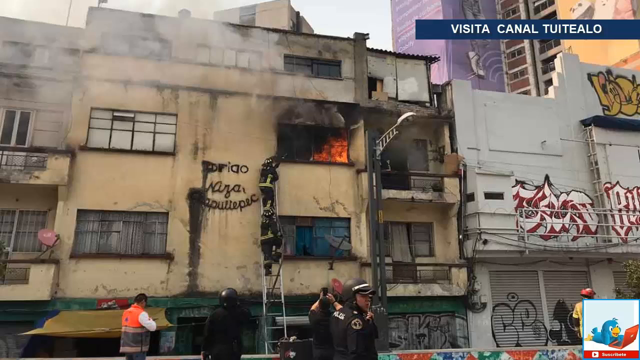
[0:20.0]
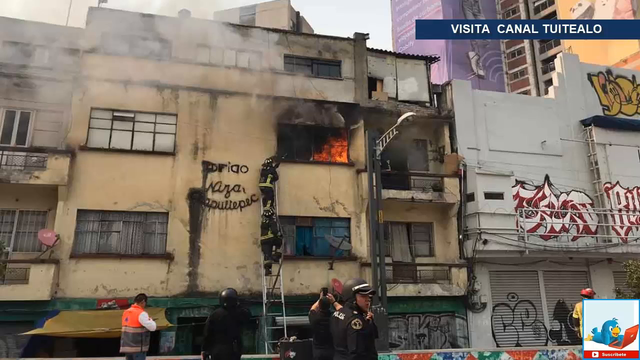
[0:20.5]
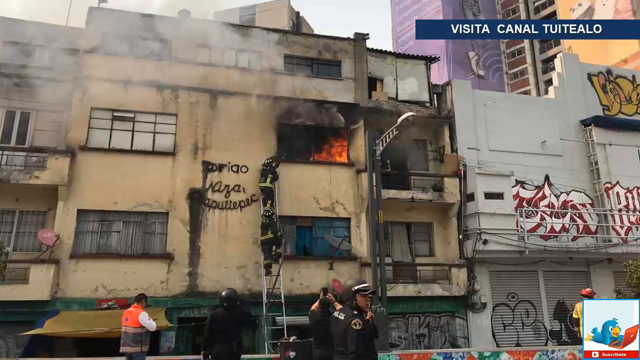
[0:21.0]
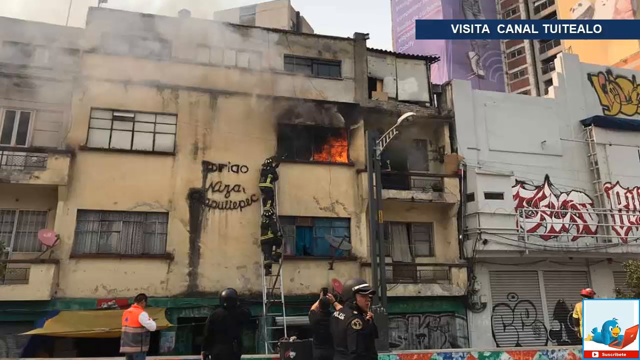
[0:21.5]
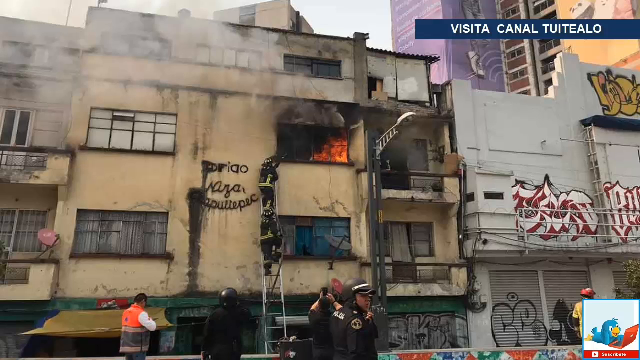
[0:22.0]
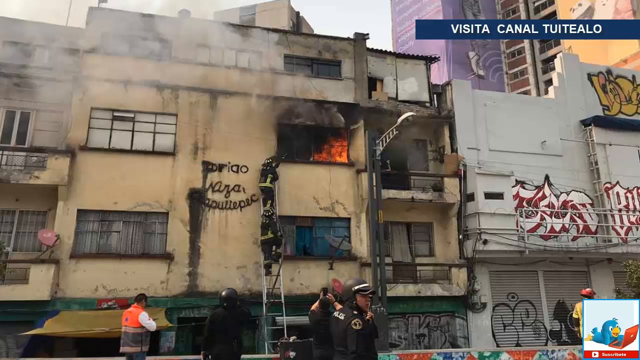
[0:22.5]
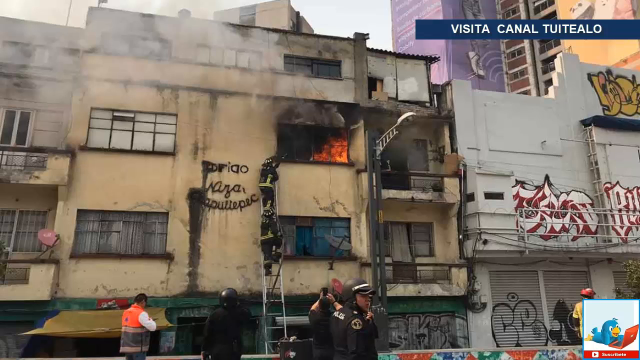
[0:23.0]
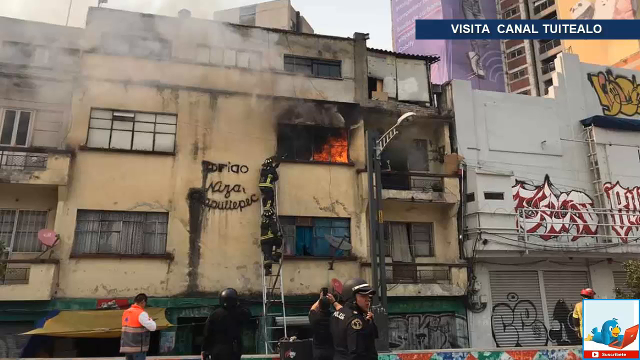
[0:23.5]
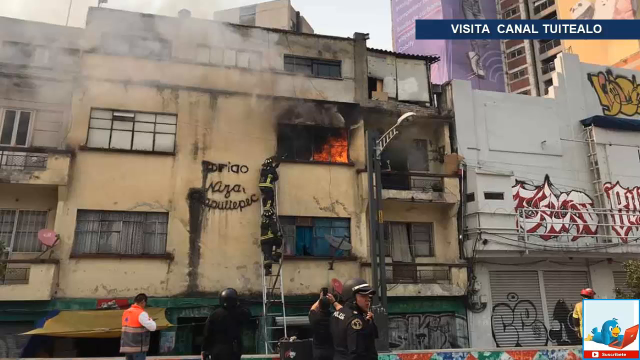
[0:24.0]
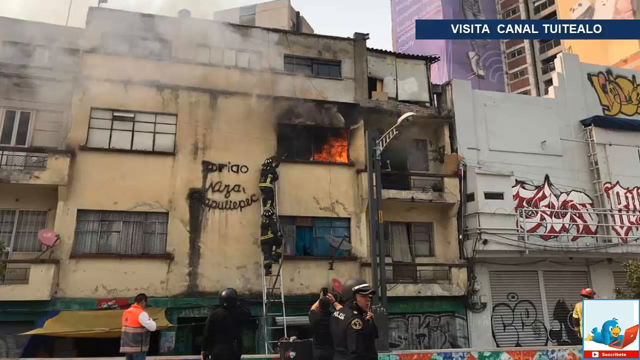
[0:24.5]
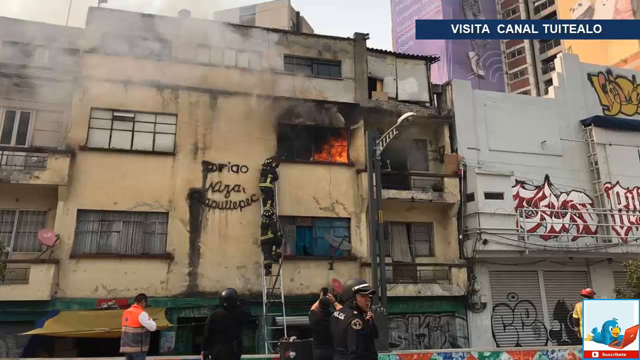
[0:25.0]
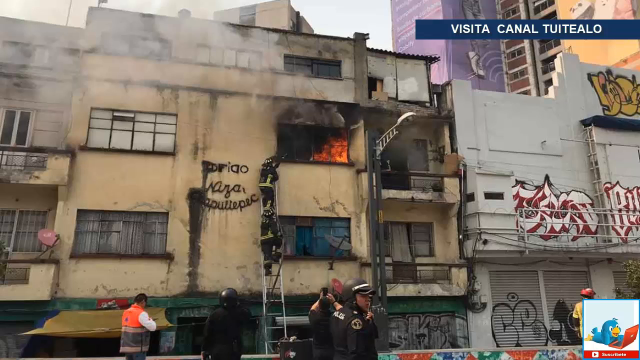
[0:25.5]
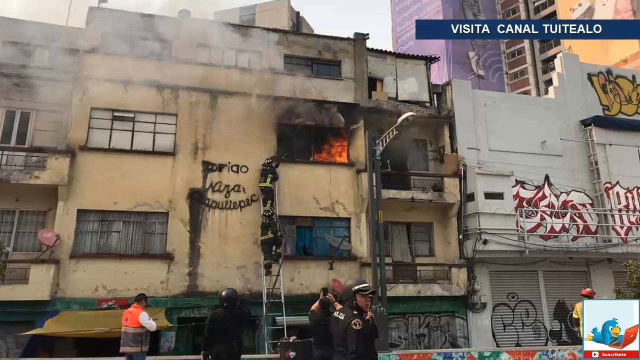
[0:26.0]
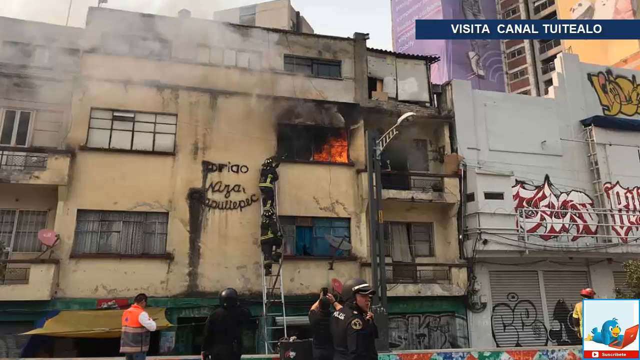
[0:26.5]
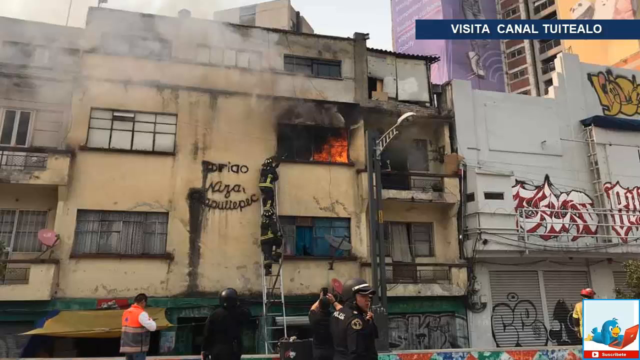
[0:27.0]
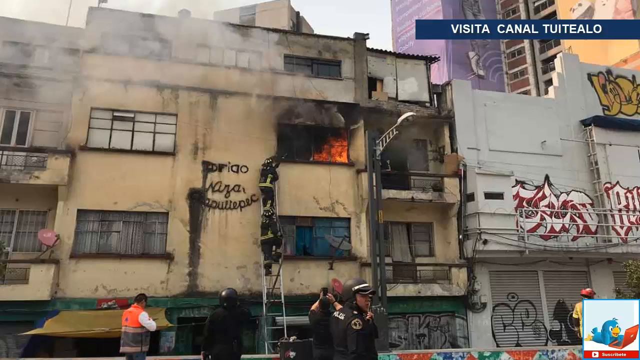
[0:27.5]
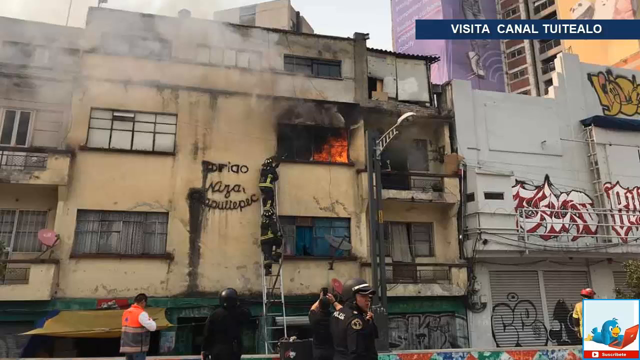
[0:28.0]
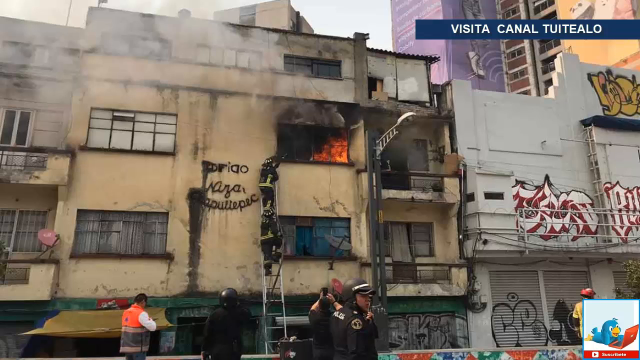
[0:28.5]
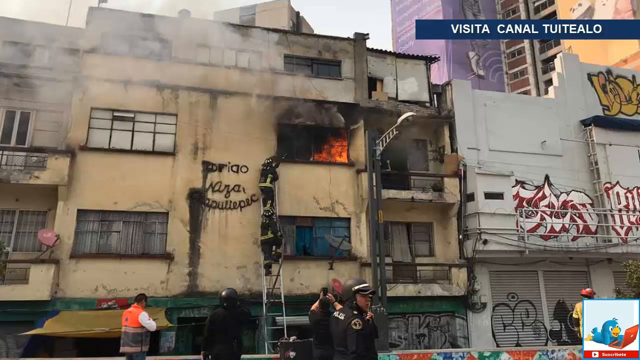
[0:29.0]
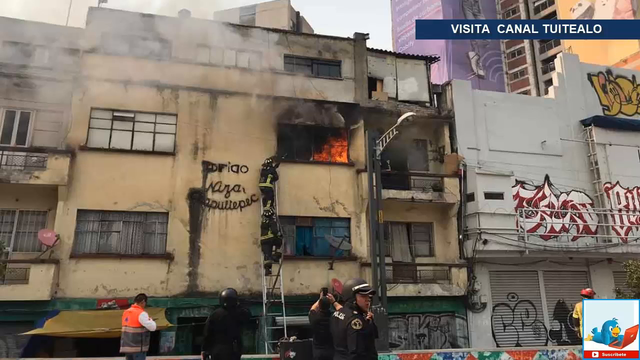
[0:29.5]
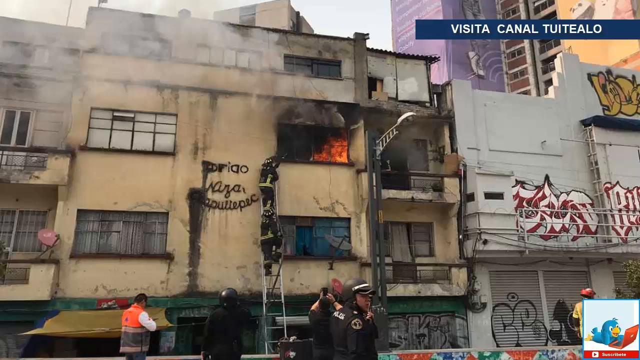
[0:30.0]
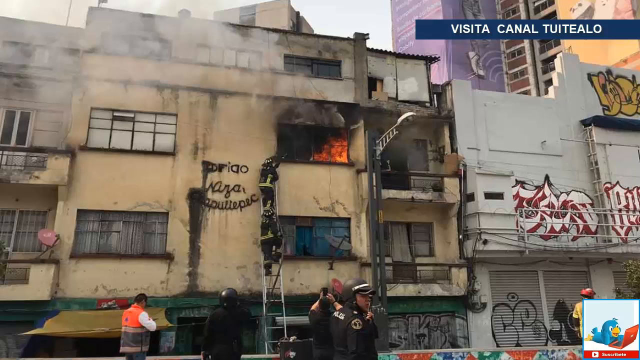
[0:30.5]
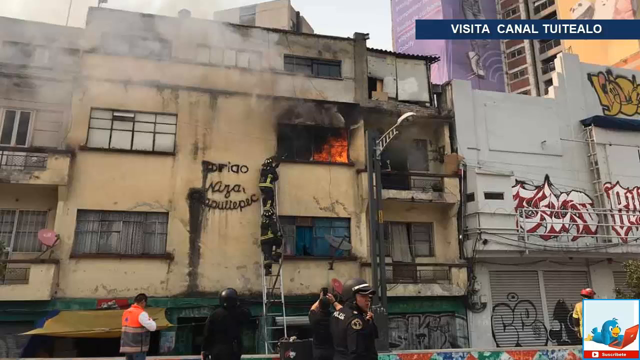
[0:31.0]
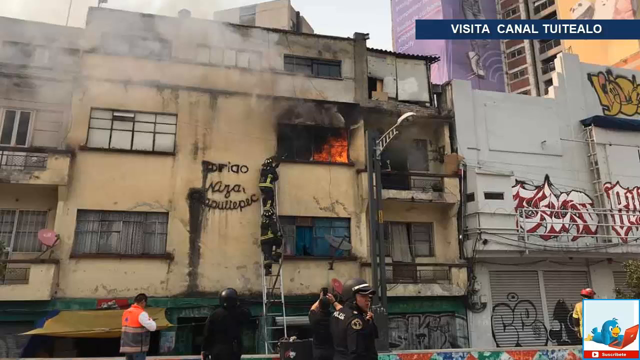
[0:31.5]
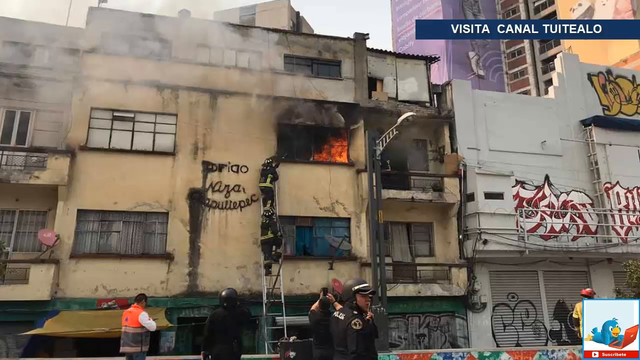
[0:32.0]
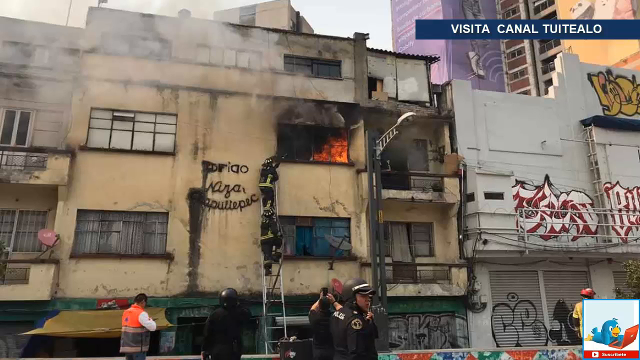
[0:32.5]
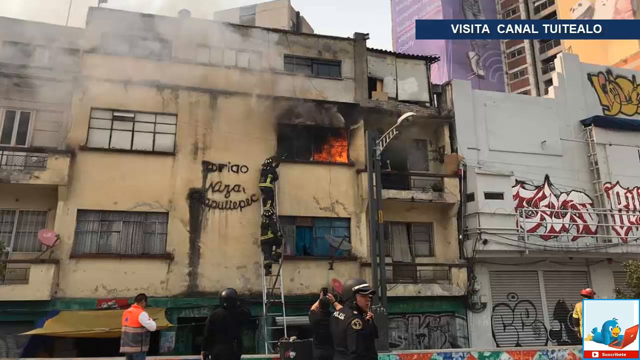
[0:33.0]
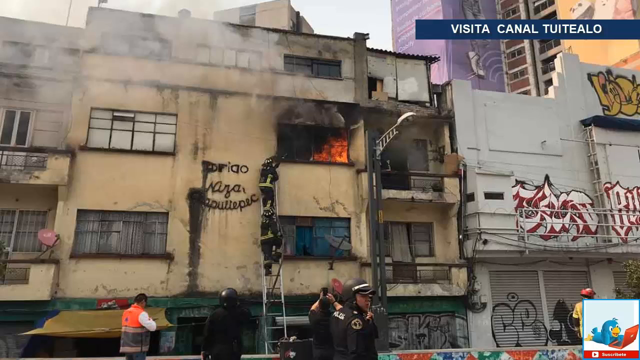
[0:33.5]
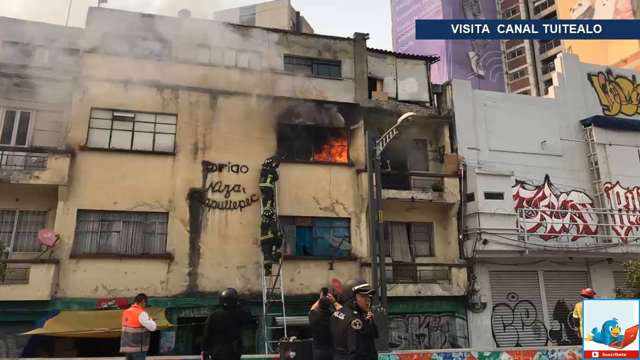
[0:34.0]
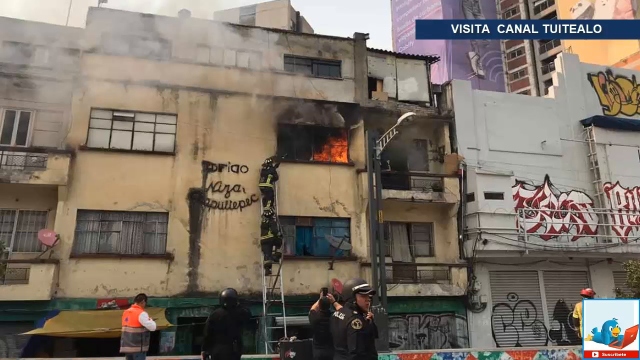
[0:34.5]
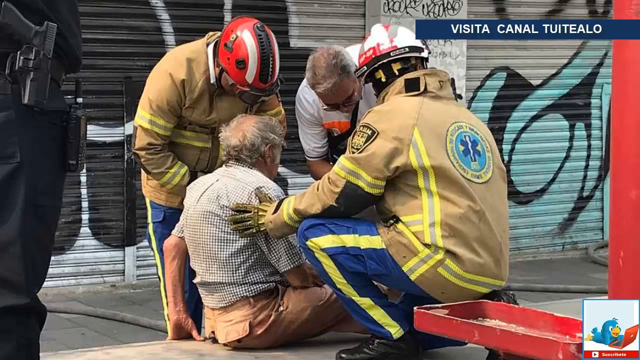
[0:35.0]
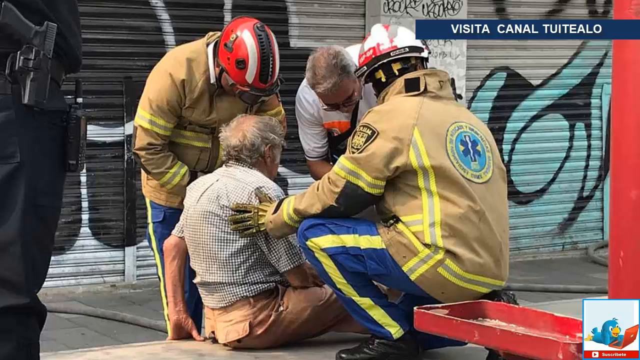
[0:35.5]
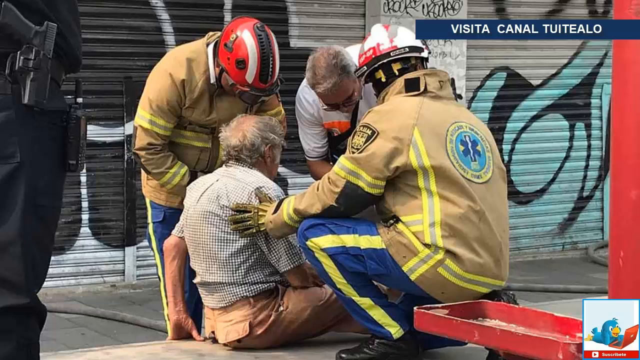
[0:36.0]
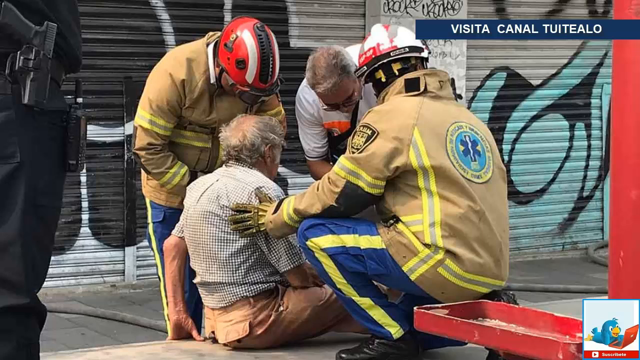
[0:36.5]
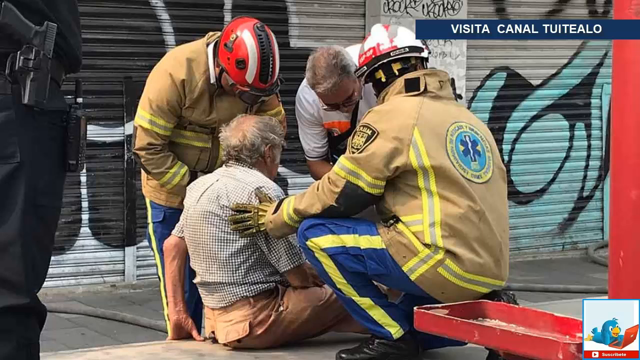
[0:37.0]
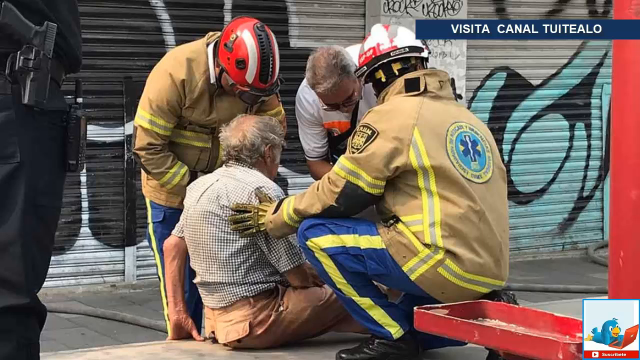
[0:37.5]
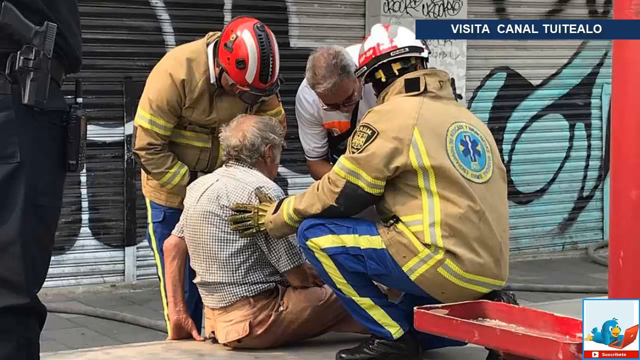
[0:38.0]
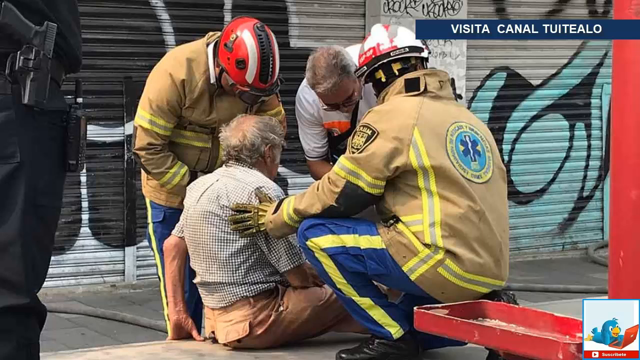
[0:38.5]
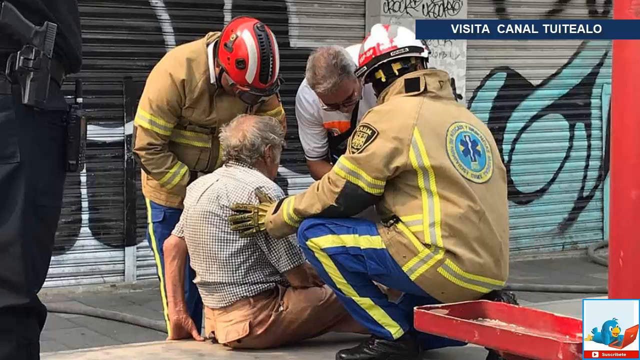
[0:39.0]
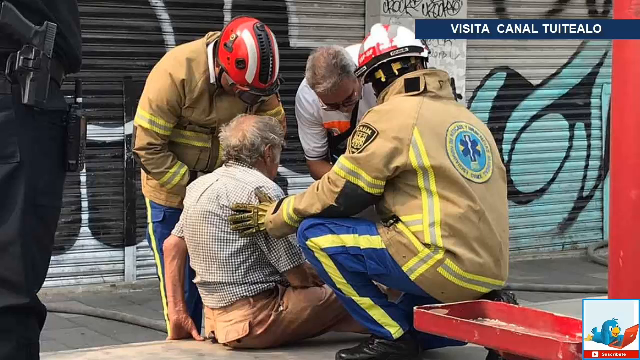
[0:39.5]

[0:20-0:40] A cement block type building is on fire, perhaps somewhere in Latin America; this is Spanish-language TV. The building is tan or yellow in color and has 11 windows, one of which shows a full-fledged fire inside. Two firefighters climb a ladder into the building; they appear to be holding a hose and waiting for water to be supplied to it. A satellite dish is on the lower left-hand corner of the building. Some sort of fabric is stretched across the base of the building, which looks to be green. Two columns are visible, and a yellow piece of fabric is attached to the building, with tension lines where it attaches somewhere else. A man standing at the foot of the building wears an orange safety jacket and a white shirt. Another person standing at the base of the building wears all black and a black helmet. A person in all black with a black wristband holds what appears to be a phone, taking a video. Behind him is a police officer in all black with a black helmet, the back of his vest reading "police". Off to the right, someone wears a yellow shirt and something red on their head. A white building is attached directly next to the burning one, covered in red and white graffiti. At its top is more graffiti that appears to be yellow outlined in black, with perhaps some pink at the base, and there is also graffiti in black.